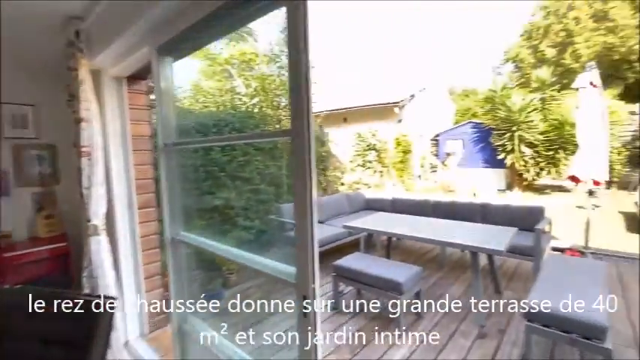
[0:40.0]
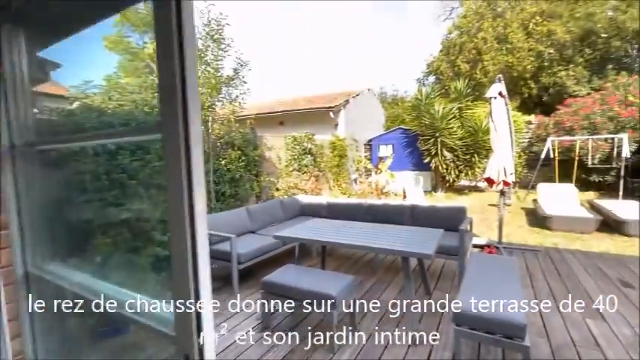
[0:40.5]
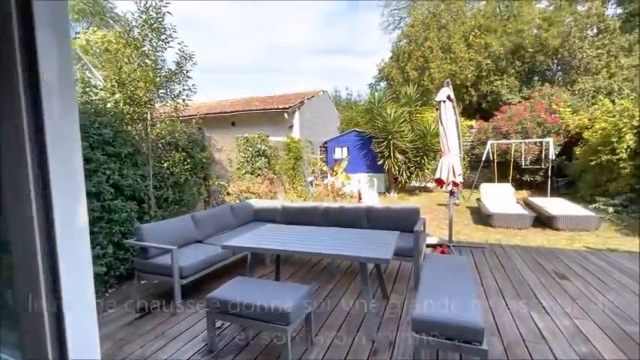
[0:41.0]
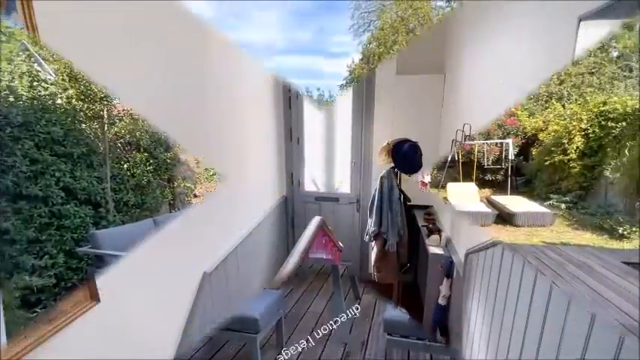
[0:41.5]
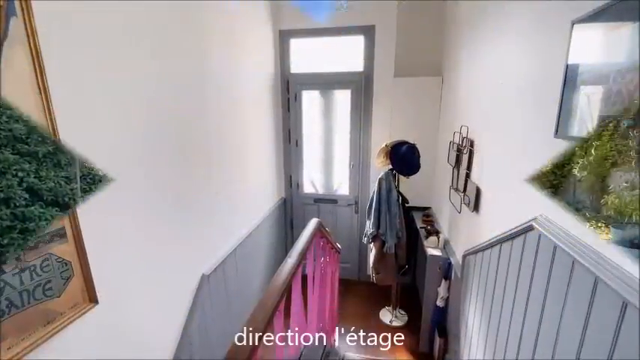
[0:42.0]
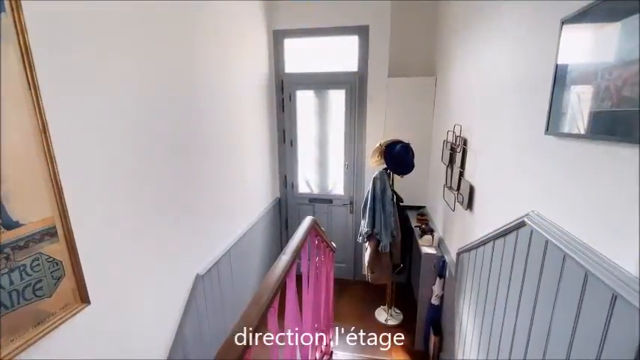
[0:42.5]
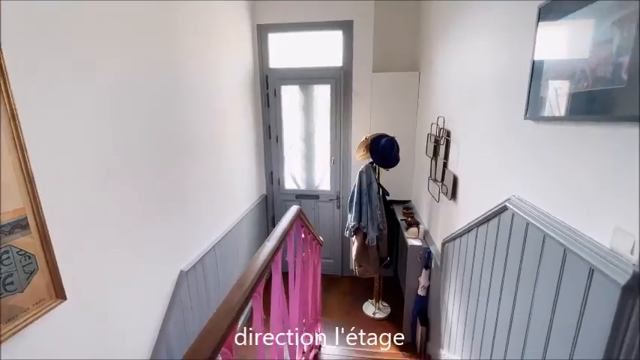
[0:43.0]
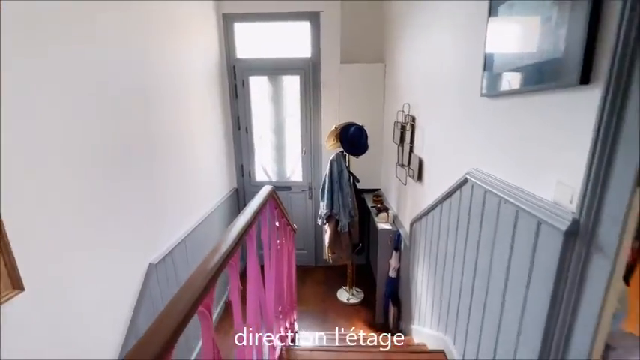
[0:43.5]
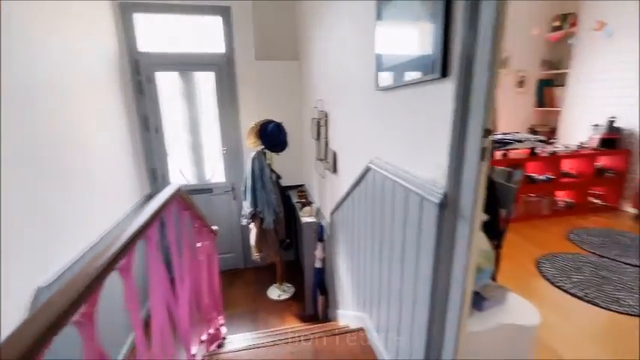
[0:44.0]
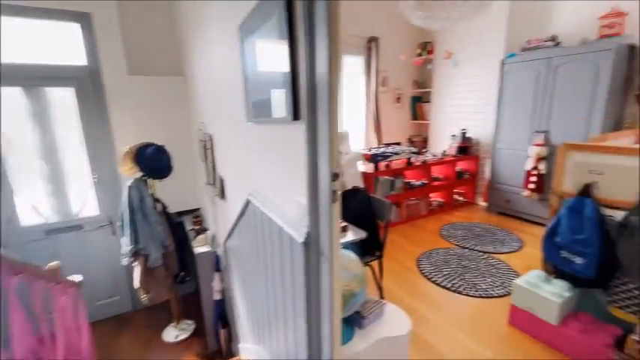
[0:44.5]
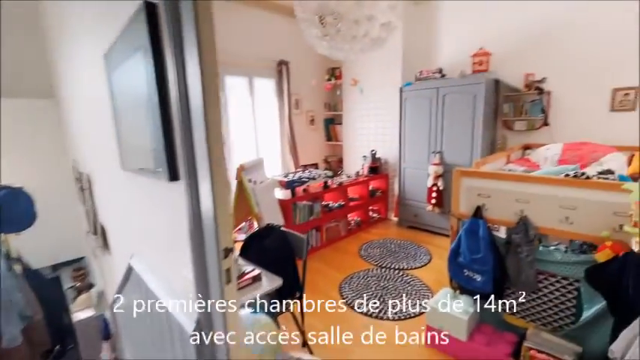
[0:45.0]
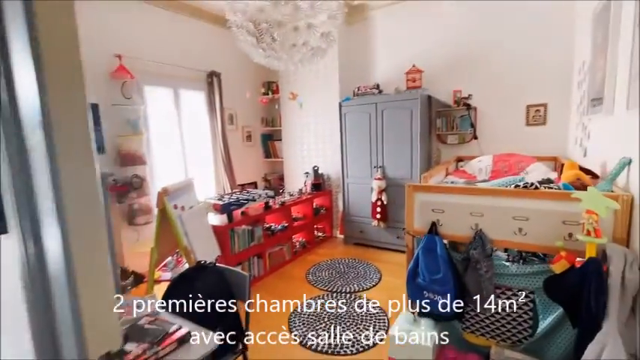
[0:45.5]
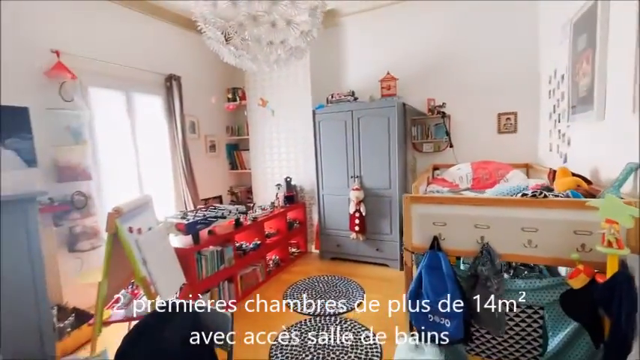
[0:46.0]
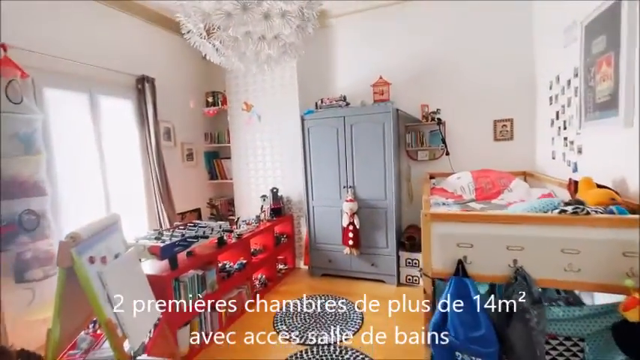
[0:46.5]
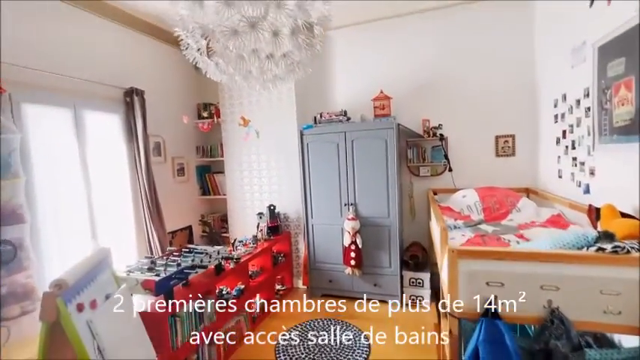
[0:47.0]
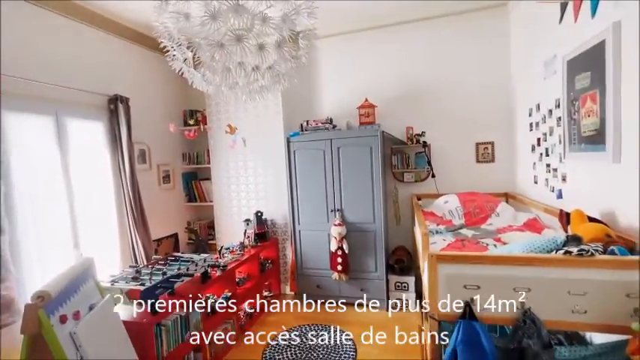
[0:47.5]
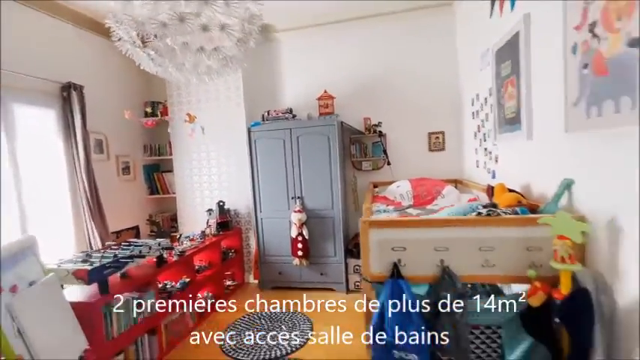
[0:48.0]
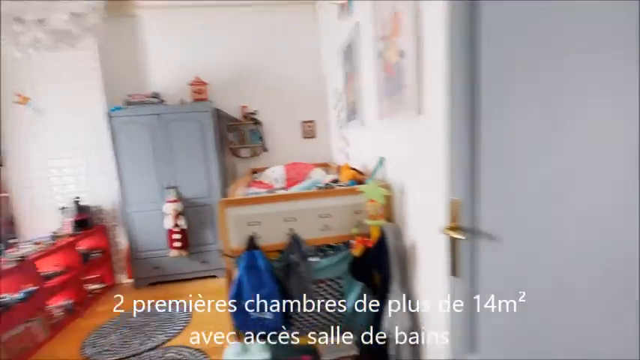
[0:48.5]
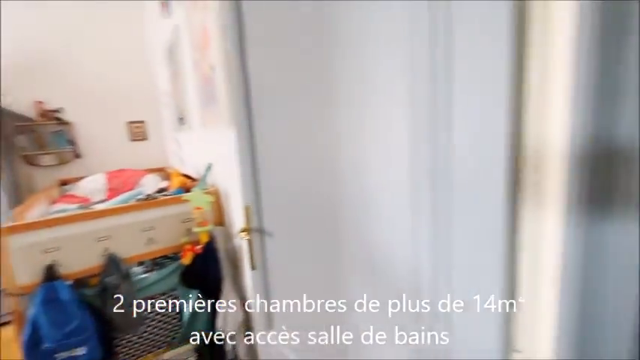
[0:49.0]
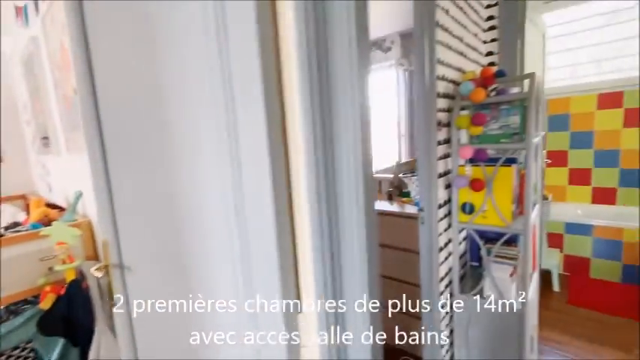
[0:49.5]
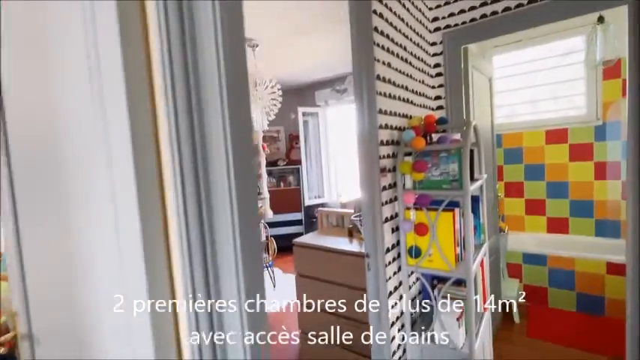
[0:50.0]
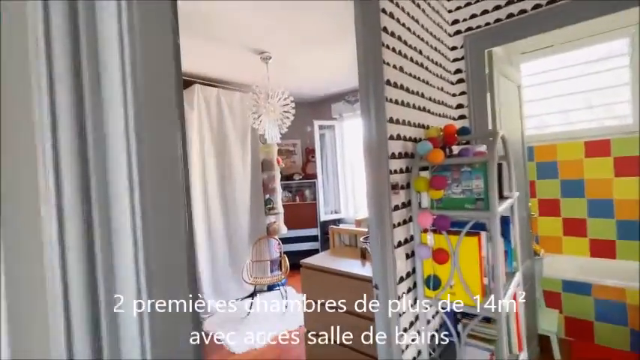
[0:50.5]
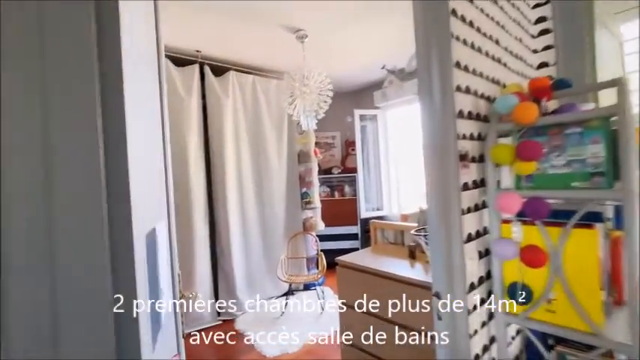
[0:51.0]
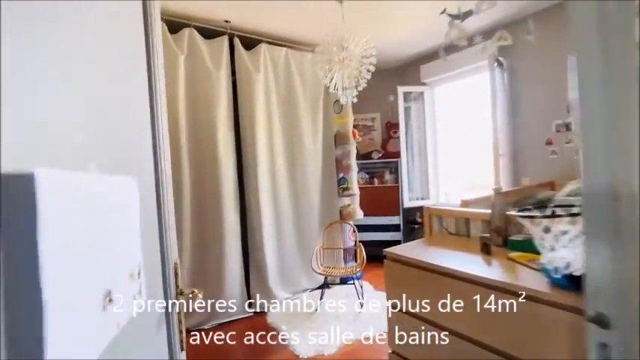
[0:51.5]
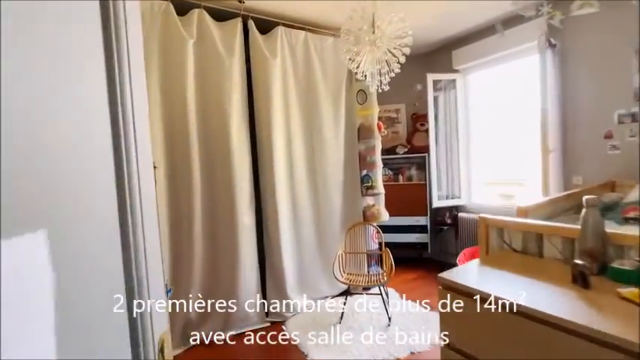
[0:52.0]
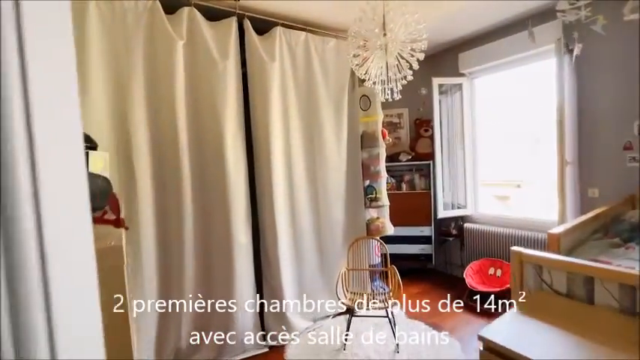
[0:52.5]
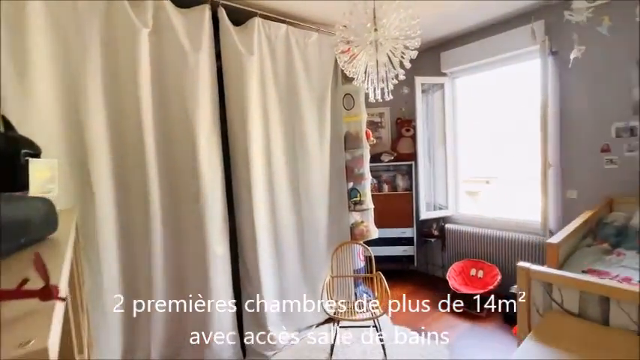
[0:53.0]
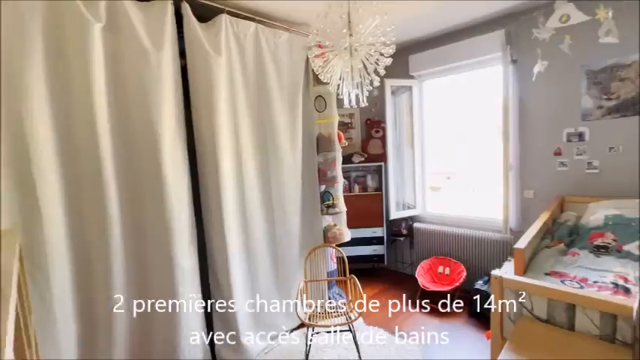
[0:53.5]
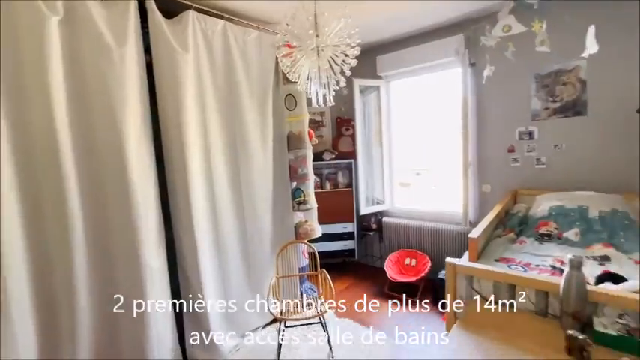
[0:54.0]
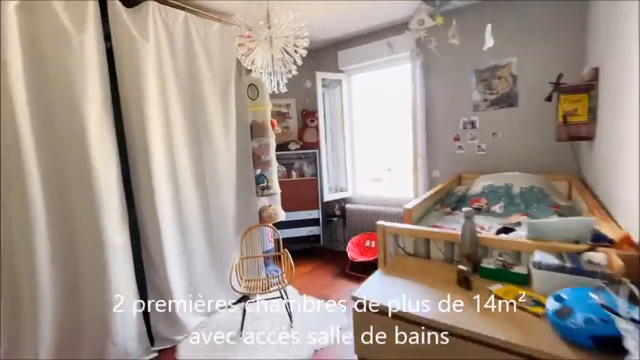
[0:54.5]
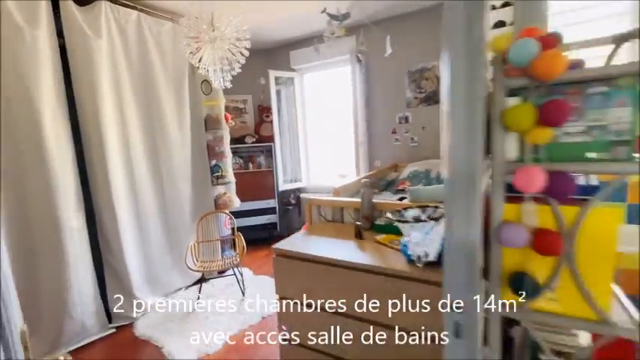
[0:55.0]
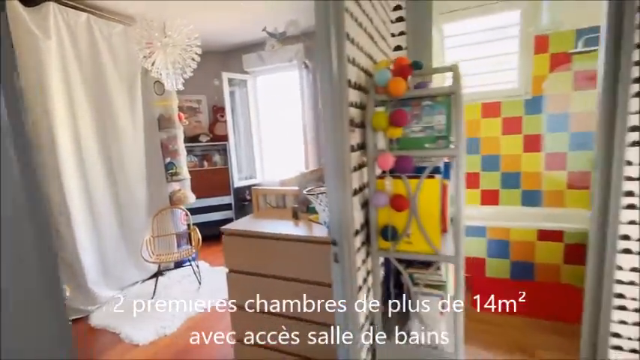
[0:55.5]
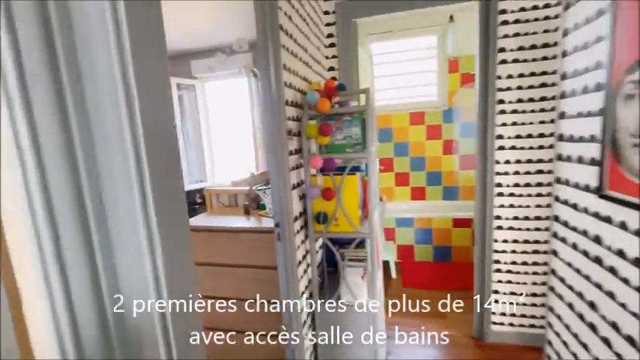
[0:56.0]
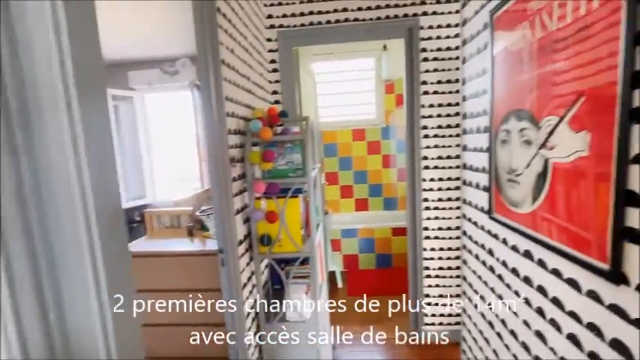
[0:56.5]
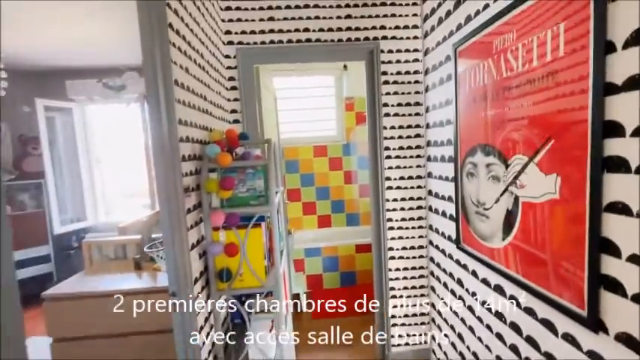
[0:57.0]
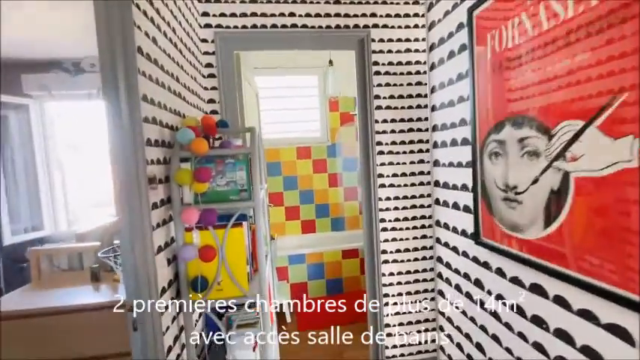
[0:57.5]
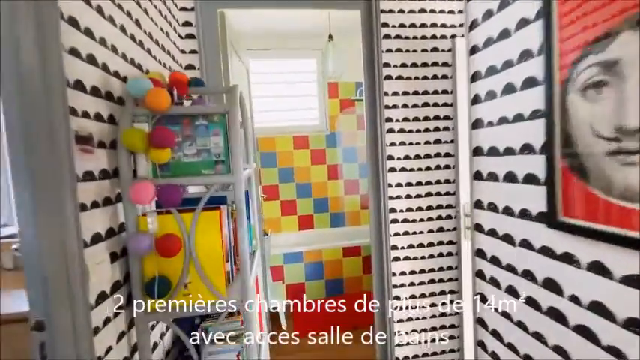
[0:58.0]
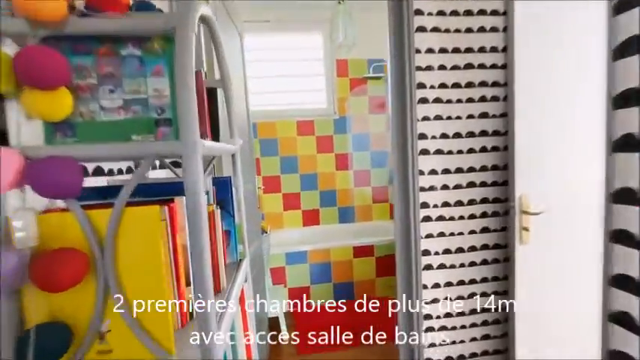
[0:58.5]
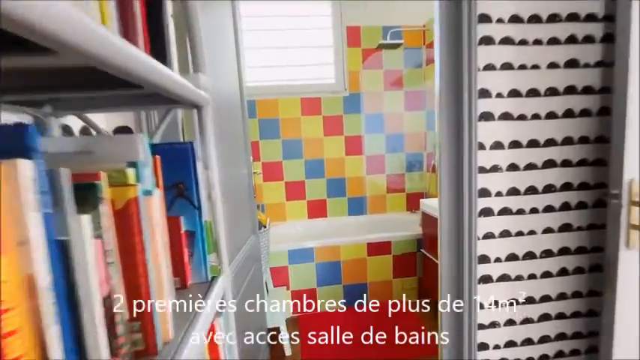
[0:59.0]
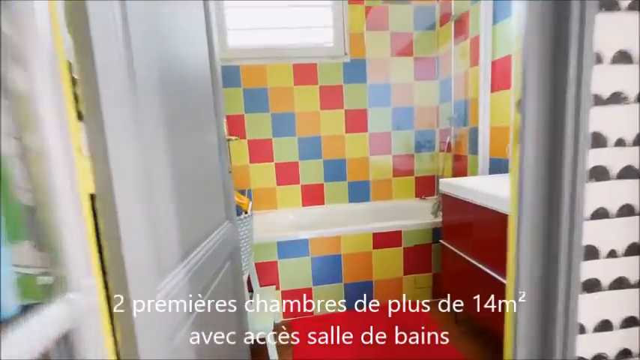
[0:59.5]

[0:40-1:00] A cramped stairway is shown, and then the camera turns right into a small room that appears to be for a child. There are toys all about and colorful cubbies. A bunk bed is on the right side with hangers on the front of it. To the left there is a large window with a curtain on one side. The camera turns right and enters a separate room that also appears to be for children. A shelf in the back corner has a teddy bear on top of it. To the right of that is a large set of windows with a radiator below, and to the right of that is a small one-person bed with a wood frame. The camera backs out and turns right to show a small, cramped hallway with black and white walls and a small picture hanging on the right wall. The camera goes forward past a bookshelf.